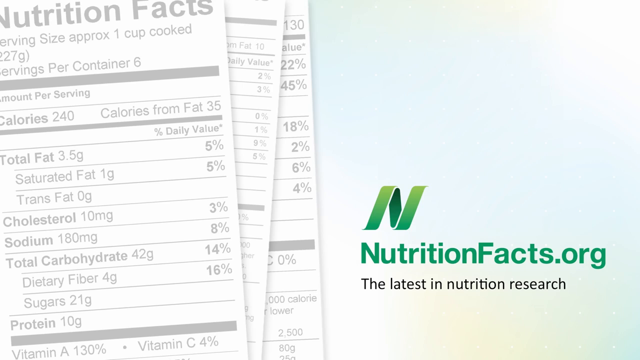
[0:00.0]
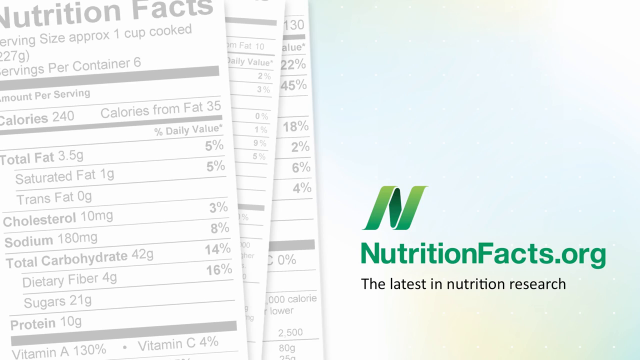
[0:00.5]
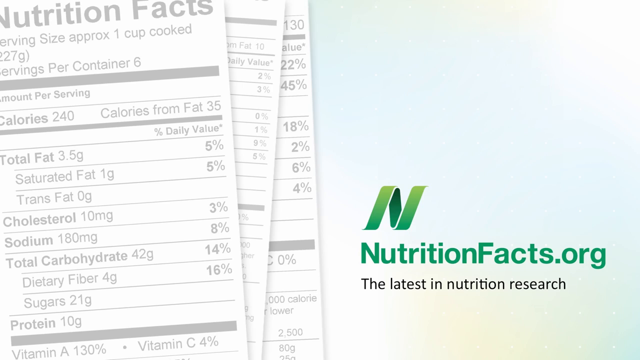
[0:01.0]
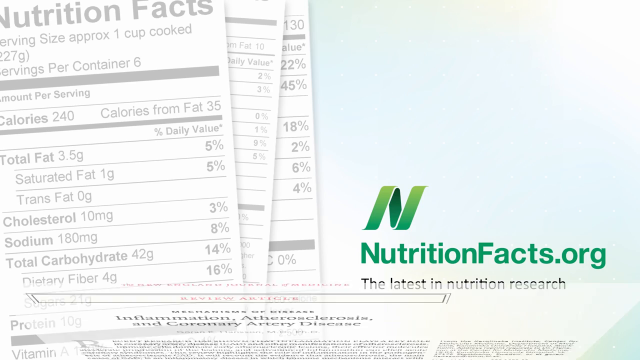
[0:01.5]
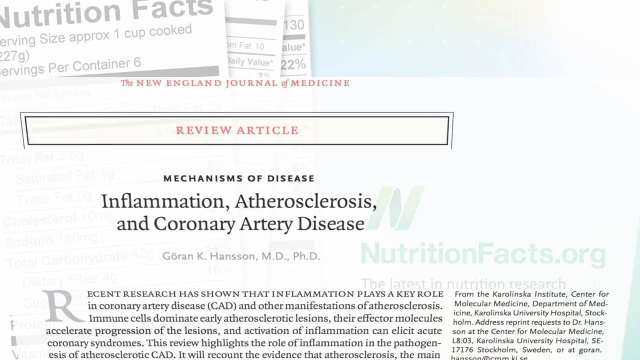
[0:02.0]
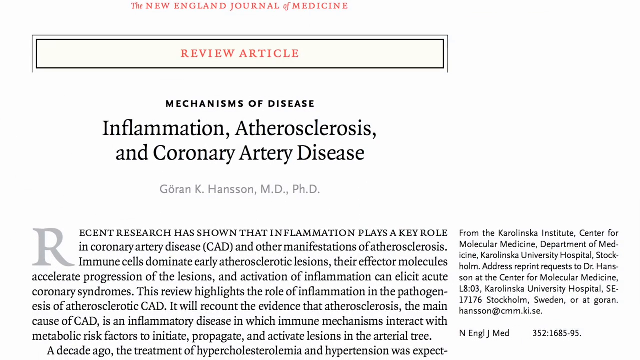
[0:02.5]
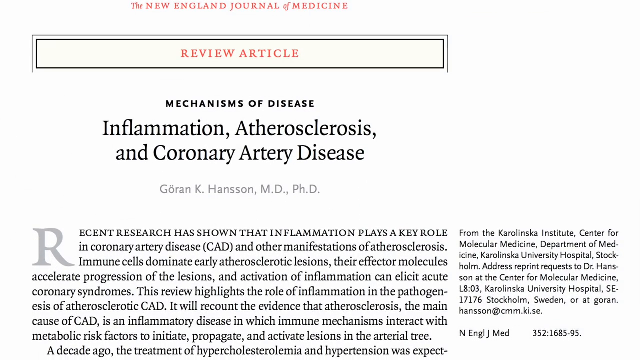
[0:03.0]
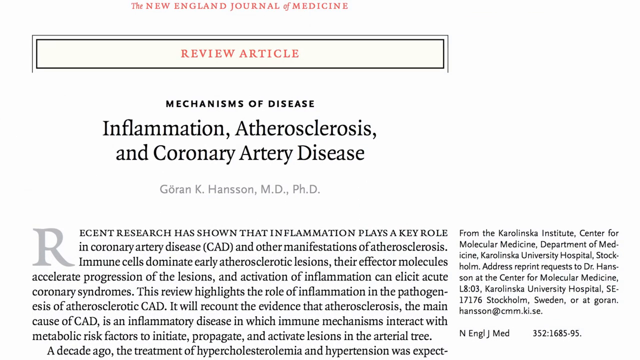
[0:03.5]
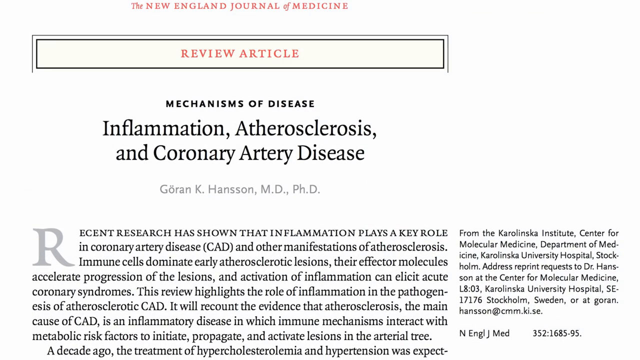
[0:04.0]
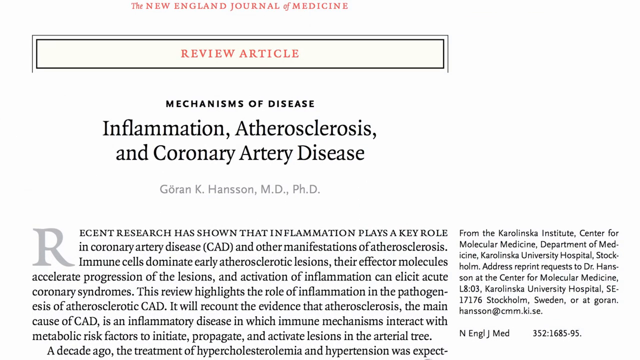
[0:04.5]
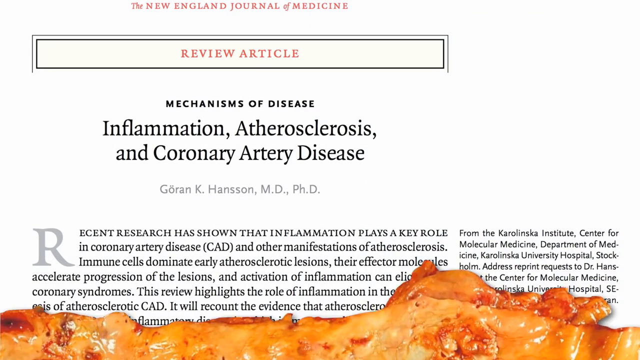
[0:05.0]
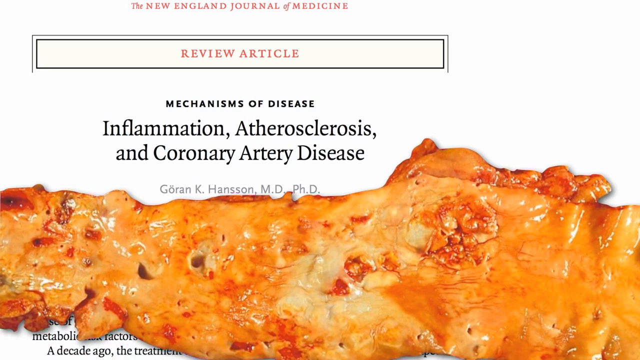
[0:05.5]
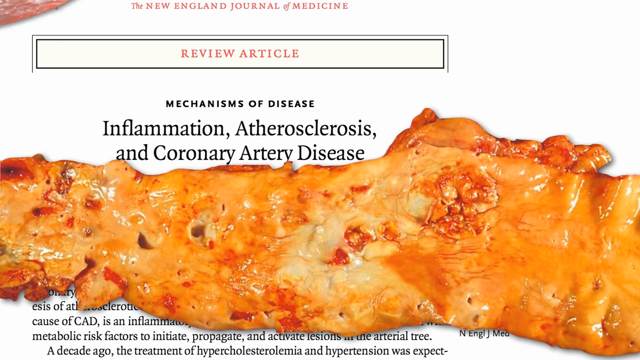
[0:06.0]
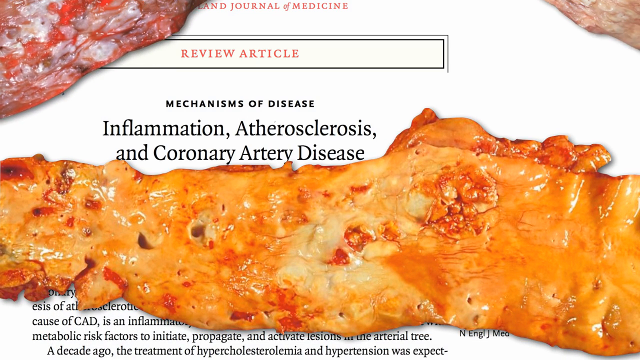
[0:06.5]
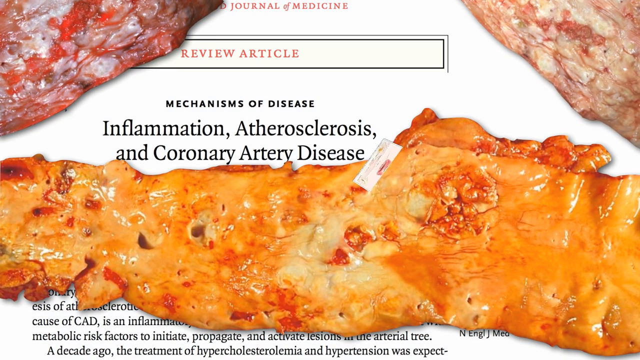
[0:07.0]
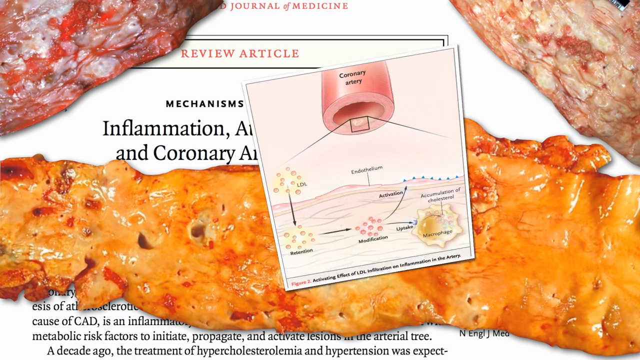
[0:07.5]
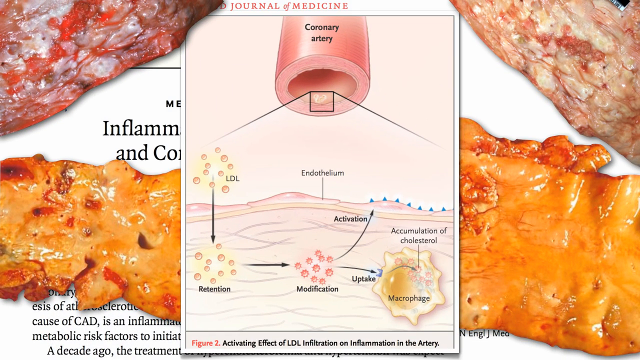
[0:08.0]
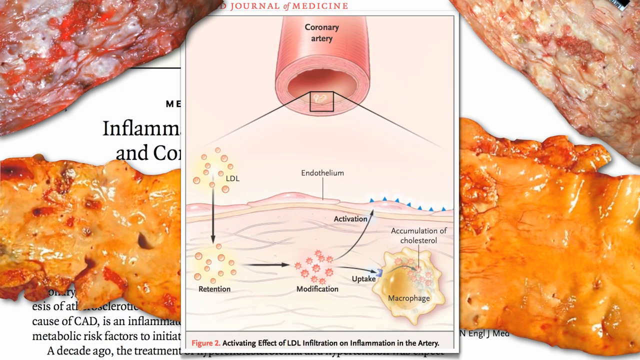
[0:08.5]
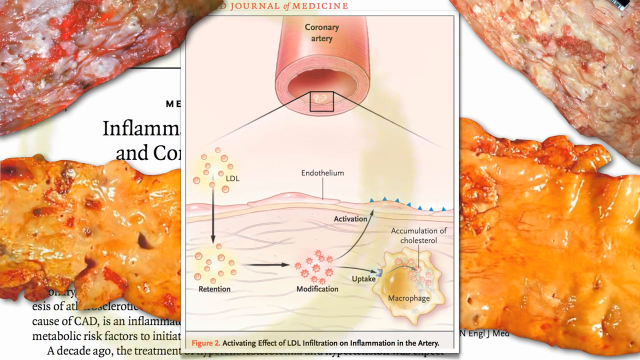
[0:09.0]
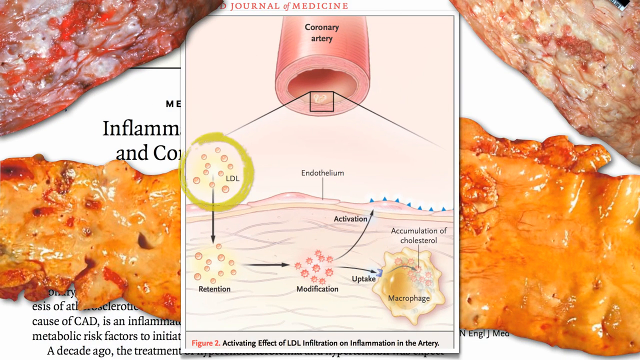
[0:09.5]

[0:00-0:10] A large green N is at the bottom right of the screen. Below it is the text "nutritionalfacts.org", and below that, in black text, "the latest in nutrition research". To the left is a nutritional facts chart listing "serving size, approximately one cup cooked", "servings per container, six", "calories, 240" and "calories from fat, 35". Below that it lists "total fat, 3.5 grams, 5%" of daily value; "saturated fat, 1 gram, 5%" of daily value; "trans fat, 0 grams"; "cholesterol, 10 milligrams, 3%" of daily value; "sodium, 180 milligrams, 8%" of daily value; "total carbohydrate, 42 grams, 14%" of daily value; "dietary fiber, 4 grams, 16%" of daily value; "sugars, 21 grams"; and "protein, 10 grams".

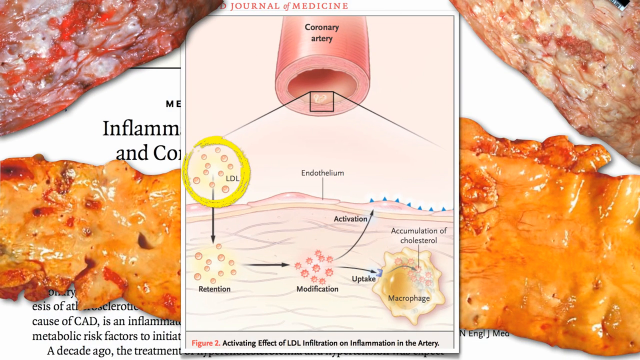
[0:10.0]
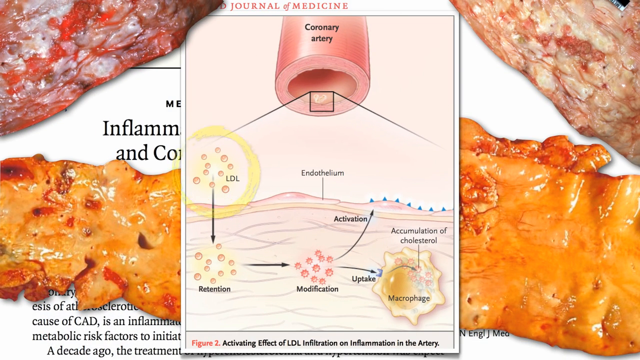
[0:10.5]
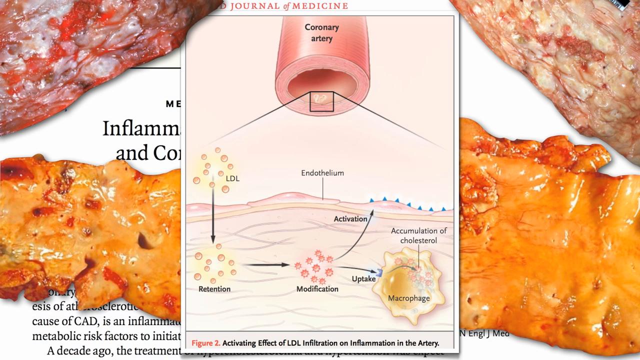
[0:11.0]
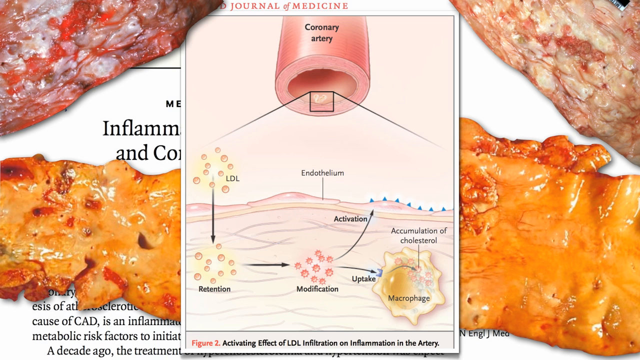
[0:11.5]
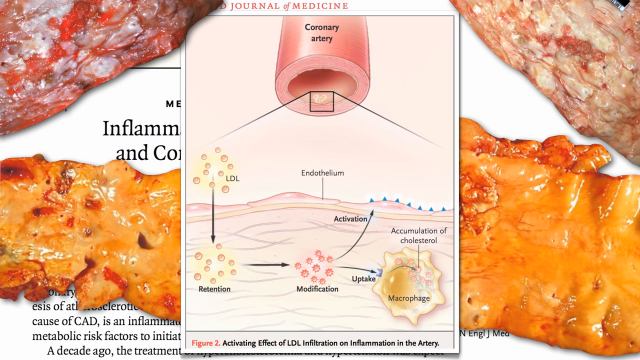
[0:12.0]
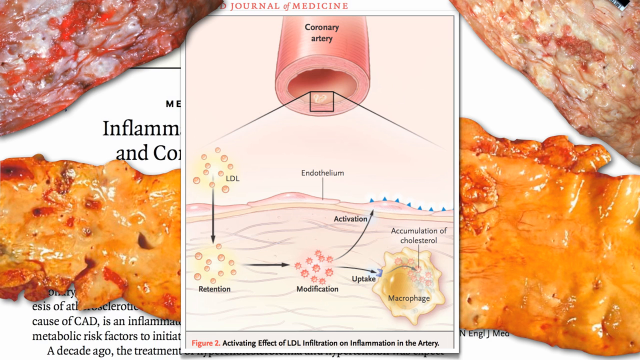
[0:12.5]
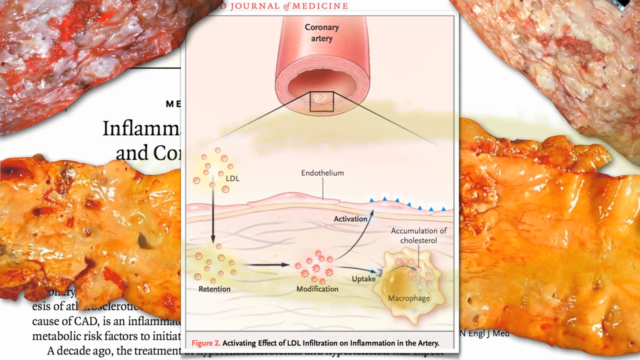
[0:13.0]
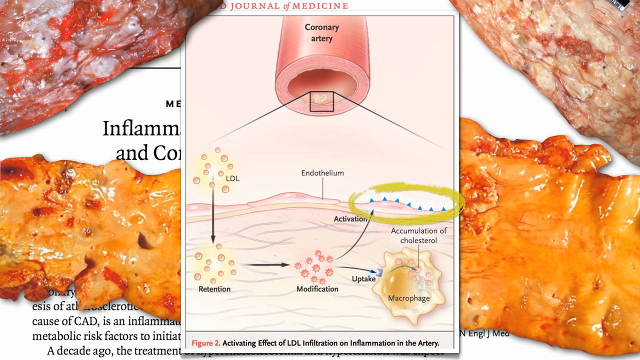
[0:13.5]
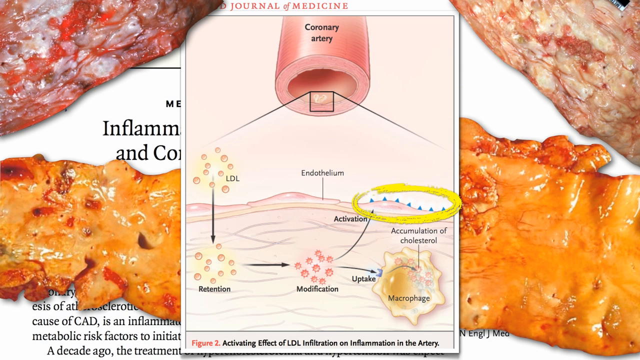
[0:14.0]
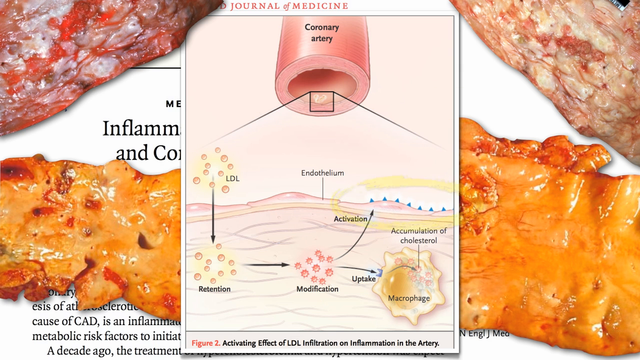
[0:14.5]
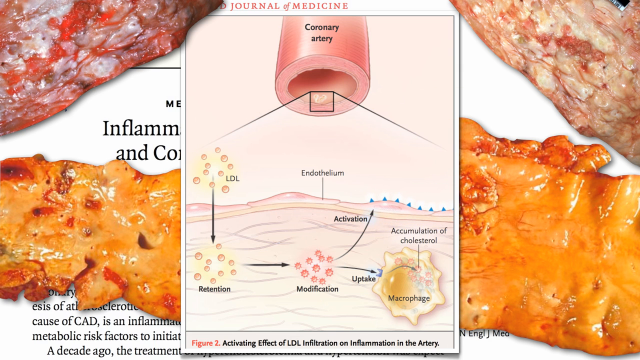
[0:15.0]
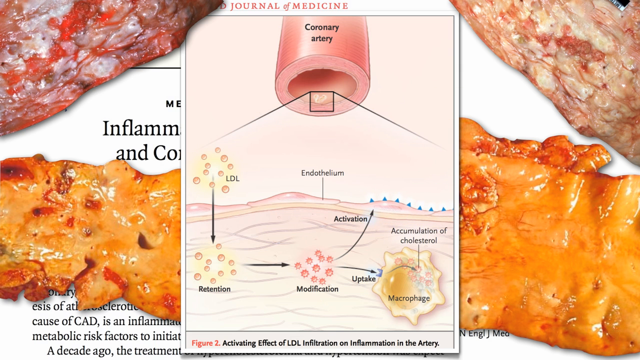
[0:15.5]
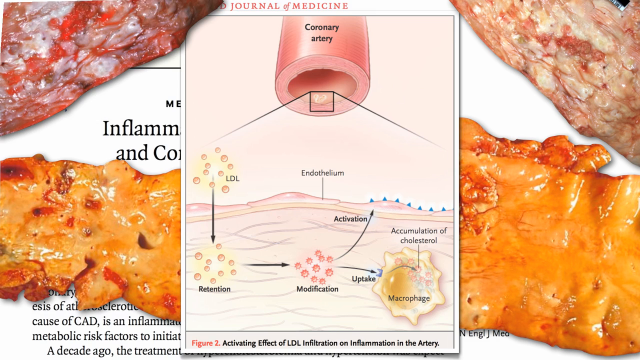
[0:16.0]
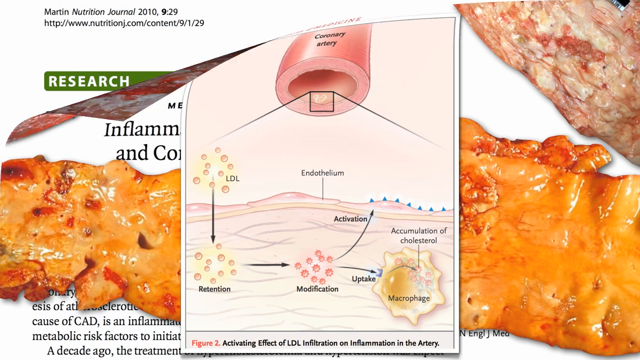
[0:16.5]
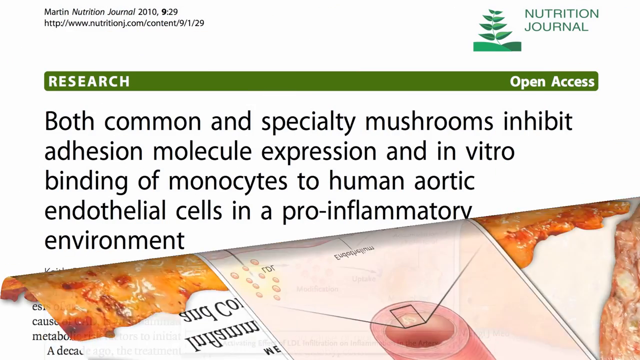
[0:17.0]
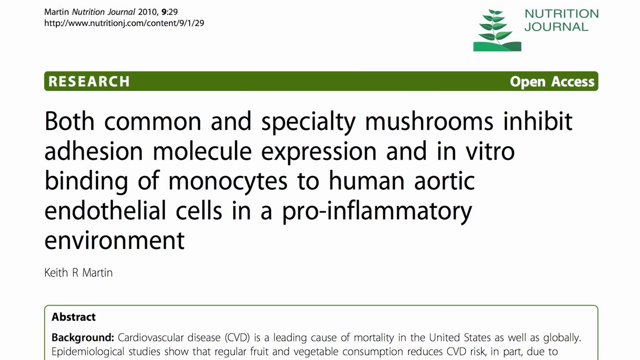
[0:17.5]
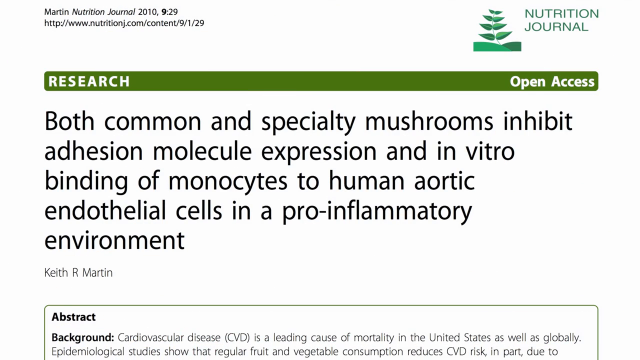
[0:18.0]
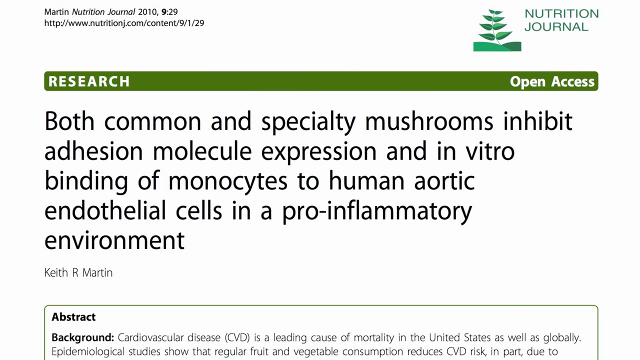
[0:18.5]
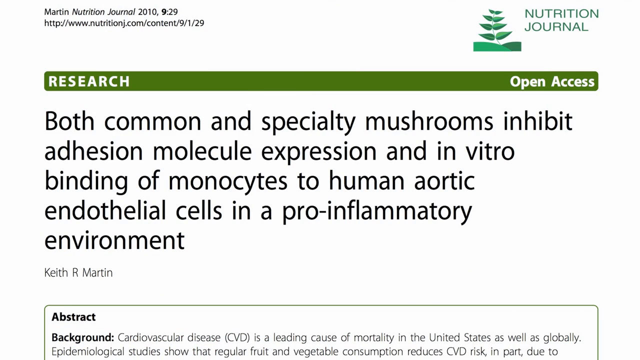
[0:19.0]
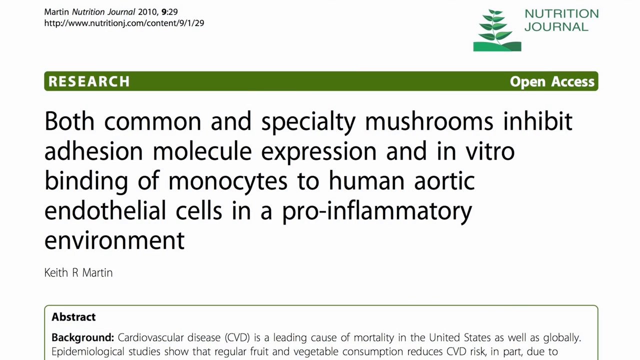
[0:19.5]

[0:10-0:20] A chart is in the middle of the screen, with a coronary artery illustration at the top of the image. Some little pink dots are labeled with the black text "LDL" inside a yellow circle. Other pink dots have the black word "retention" underneath, and some reddish-looking dots have the black text "modification" underneath. Further black text labels read "uptake", "macrophage", "accumulation of cholesterol", "activation" and "endothelium".